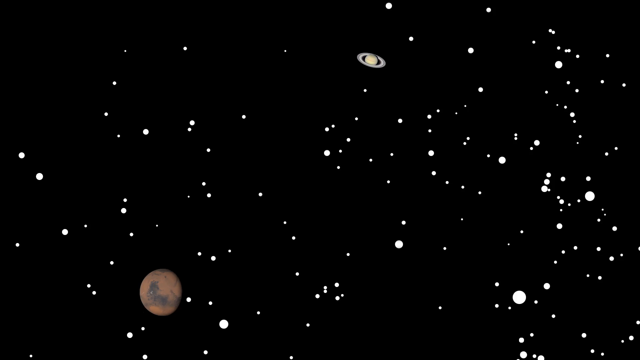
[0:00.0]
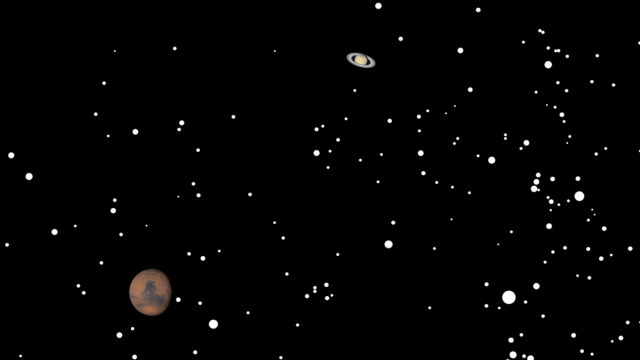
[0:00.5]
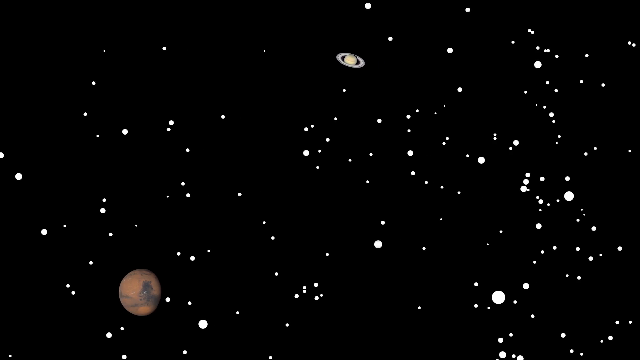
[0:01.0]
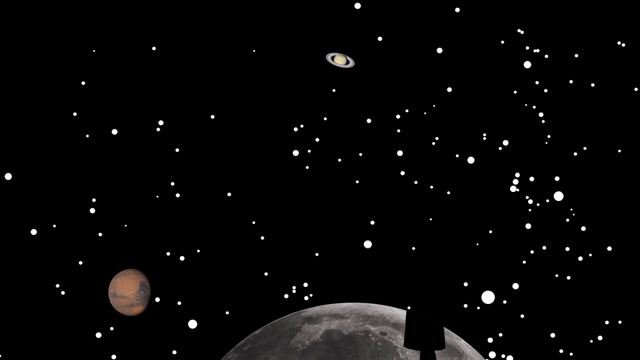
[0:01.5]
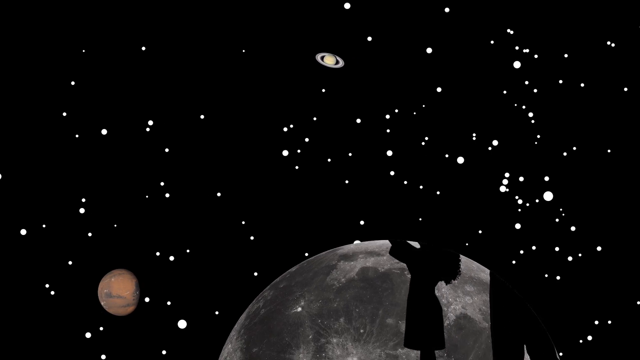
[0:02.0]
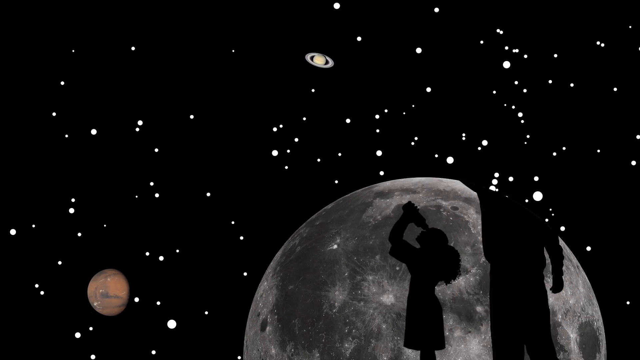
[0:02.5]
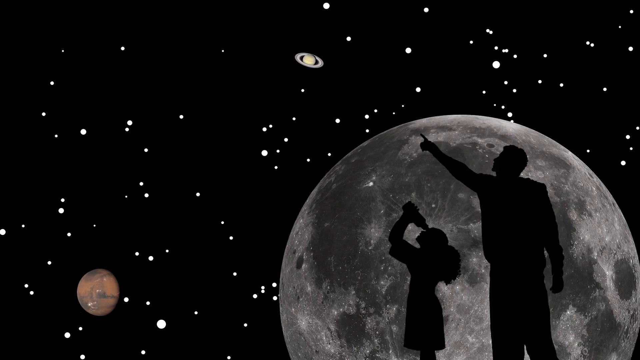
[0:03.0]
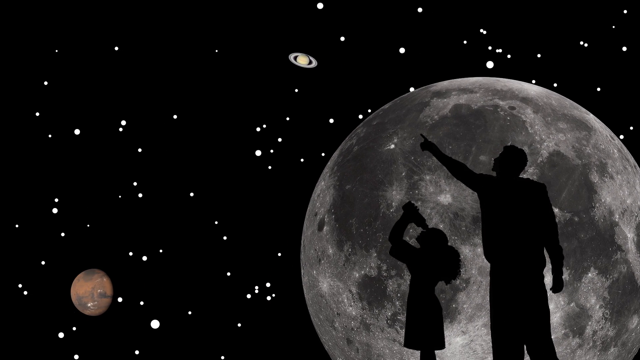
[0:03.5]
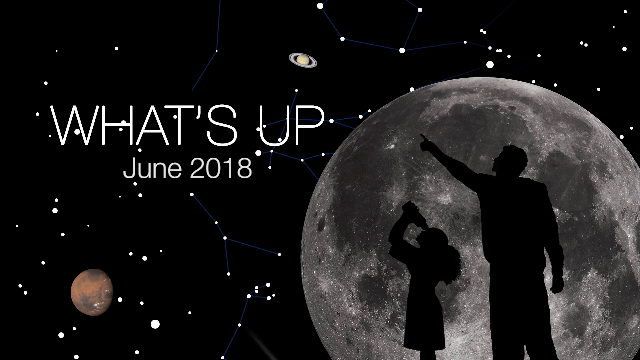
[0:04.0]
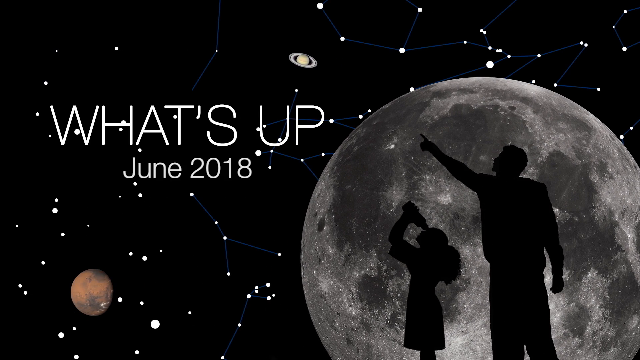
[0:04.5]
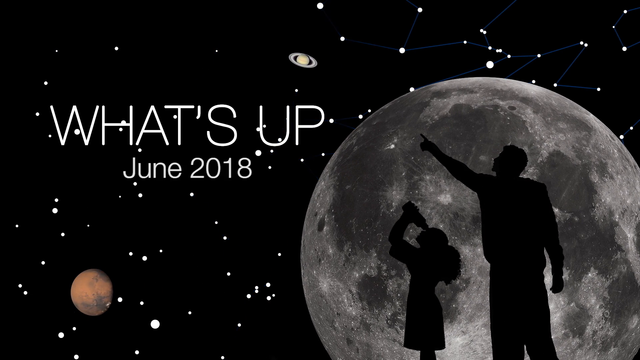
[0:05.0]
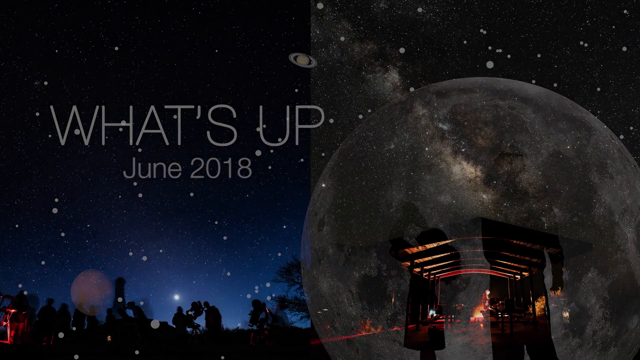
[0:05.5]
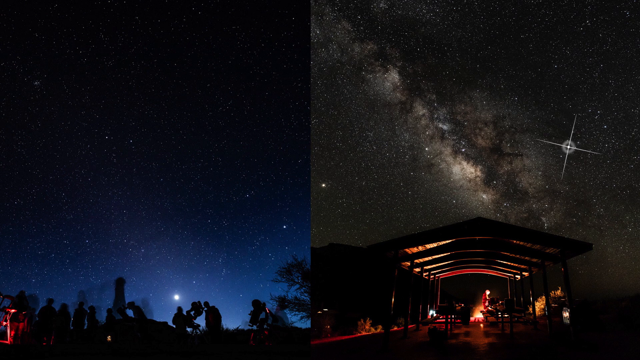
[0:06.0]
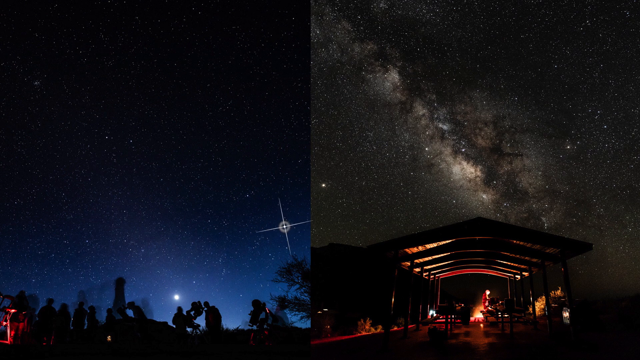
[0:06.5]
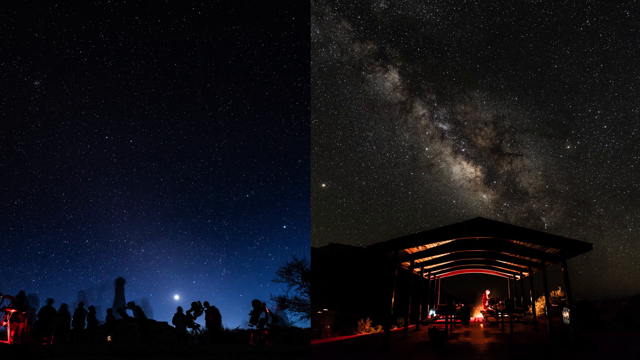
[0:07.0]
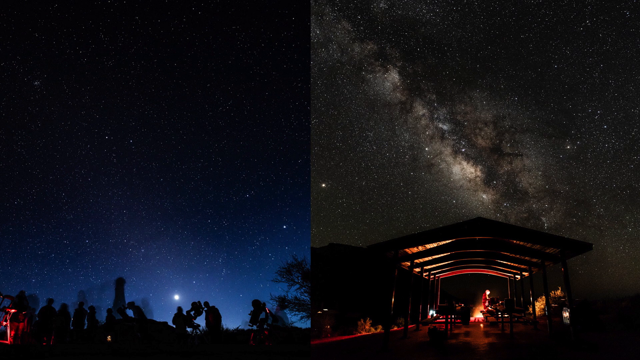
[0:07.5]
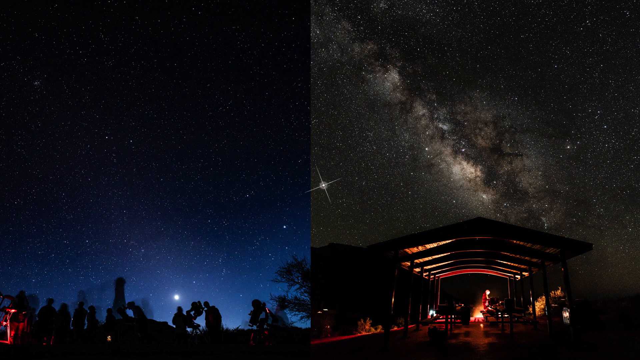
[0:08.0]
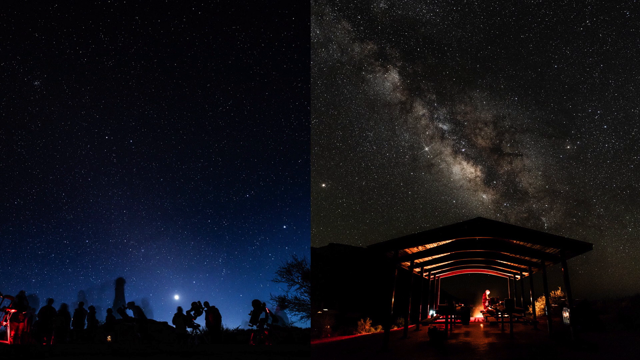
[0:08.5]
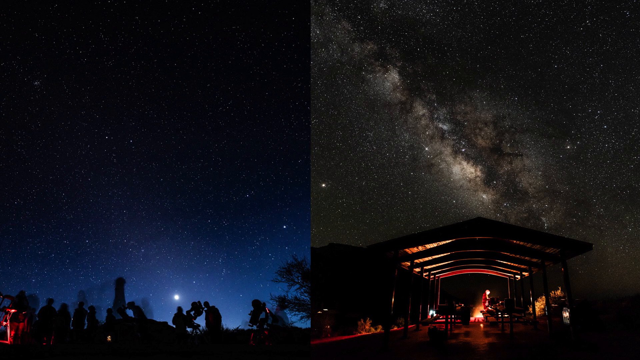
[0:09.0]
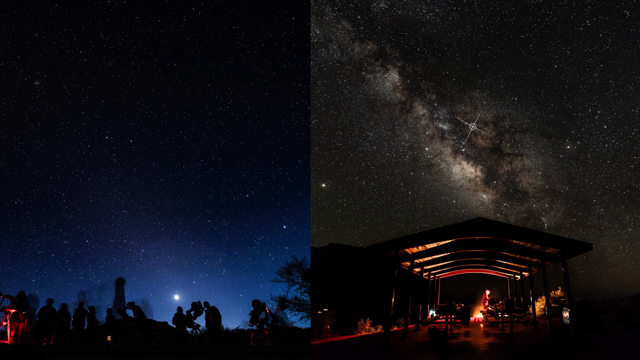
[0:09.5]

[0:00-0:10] The video appears to open with the credits for a show called What's Up, a NASA-produced show from June 2018. The opening credits show space and celestial bodies such as planets and stars, a giant moon, and two silhouettes of people pointing at the stars: one is a female child using a telescope, and the other is a male behind her. The next scene is a split screen. The left side looks like a desert sky, with some cactuses on the ground, taken at nighttime or dawn while it is dark outside. The right side is also a picture of the Milky Way, with some kind of pagoda on the ground; it is too dark to make out the structure, but the sky features the Milky Way and a very bright star. Some of the stars sparkle.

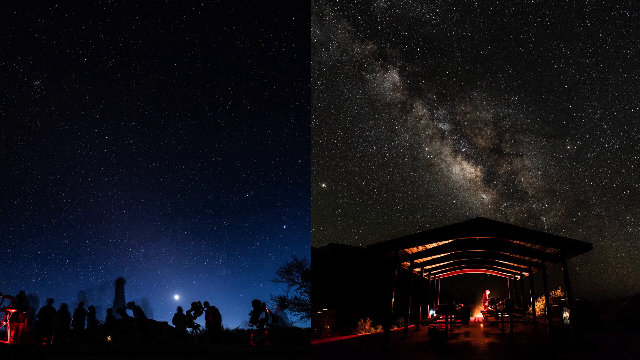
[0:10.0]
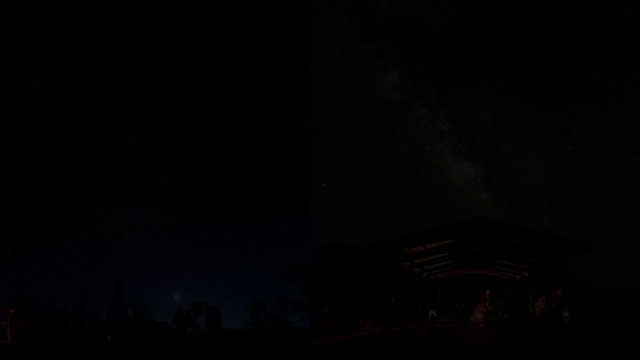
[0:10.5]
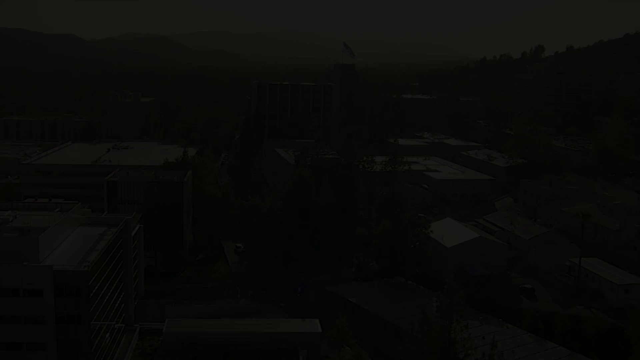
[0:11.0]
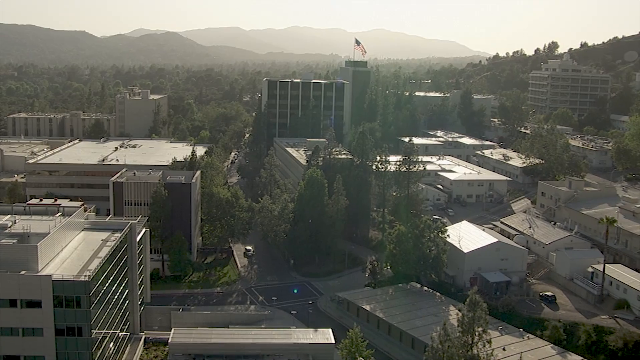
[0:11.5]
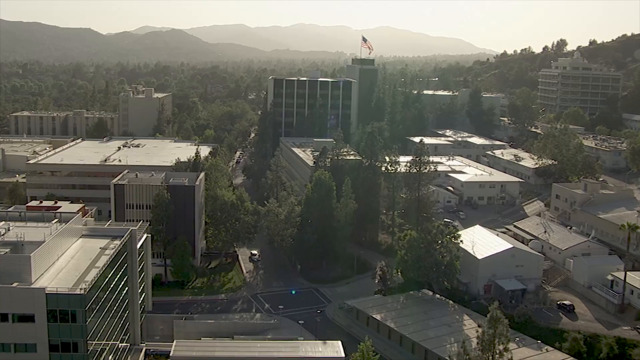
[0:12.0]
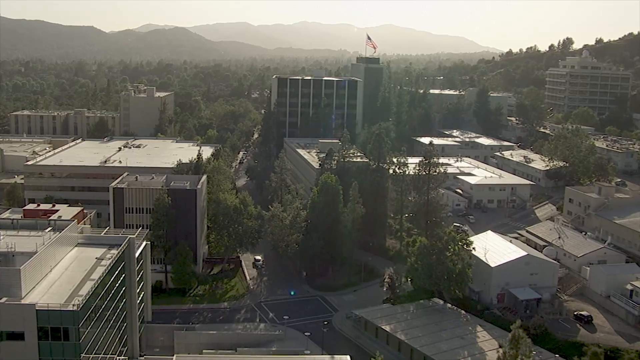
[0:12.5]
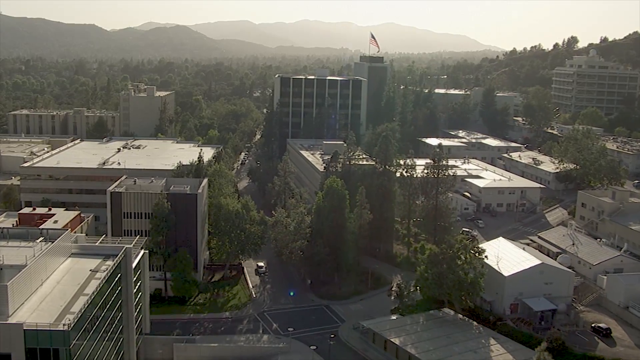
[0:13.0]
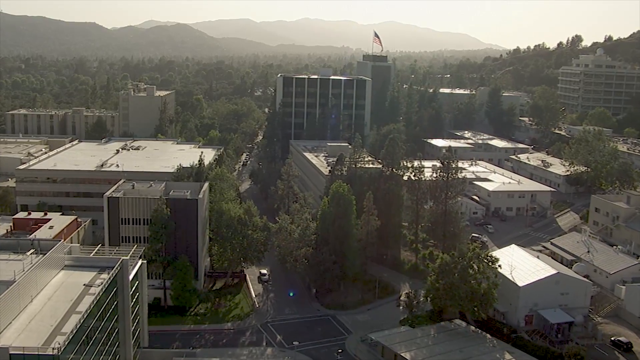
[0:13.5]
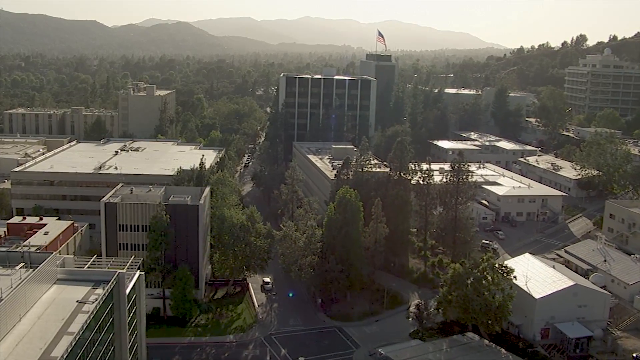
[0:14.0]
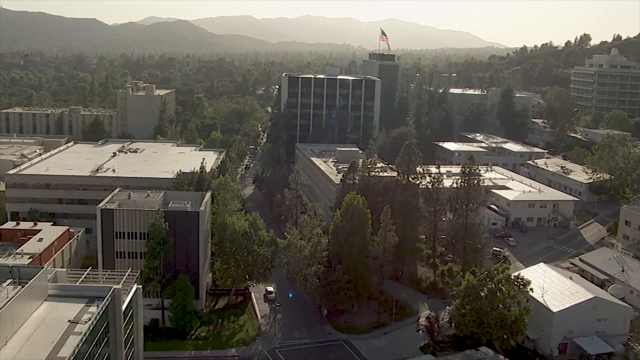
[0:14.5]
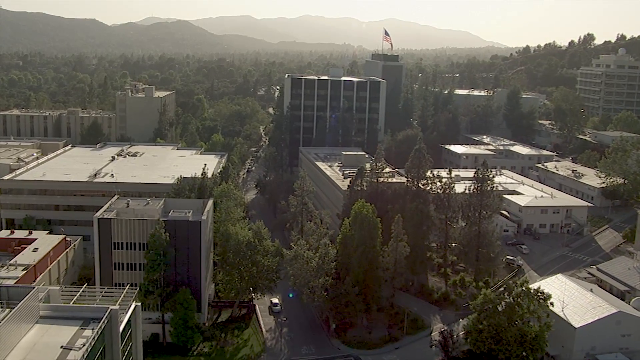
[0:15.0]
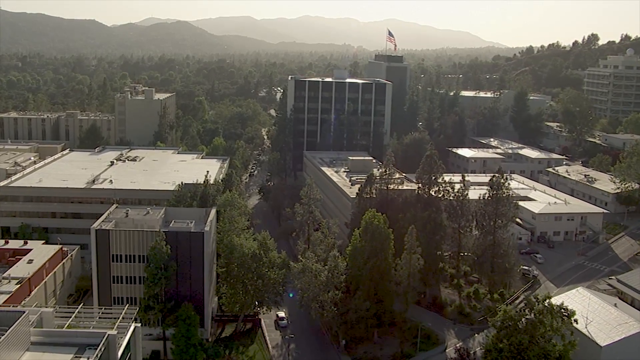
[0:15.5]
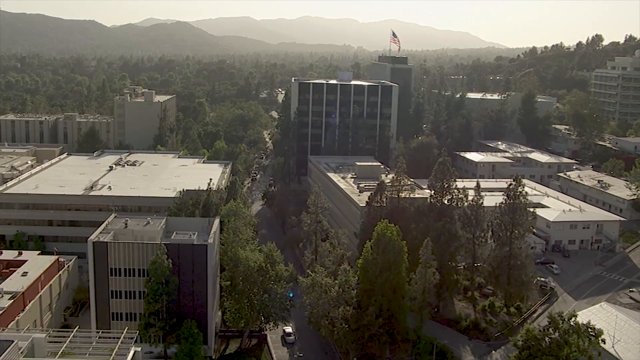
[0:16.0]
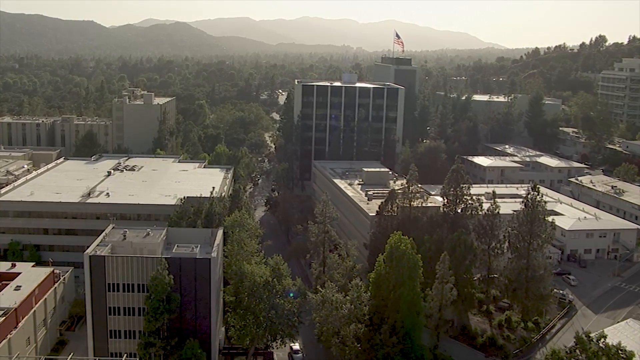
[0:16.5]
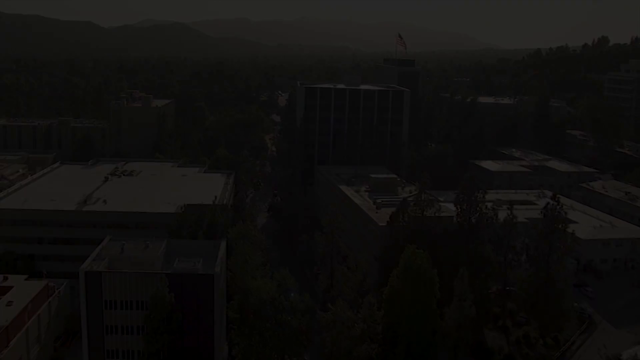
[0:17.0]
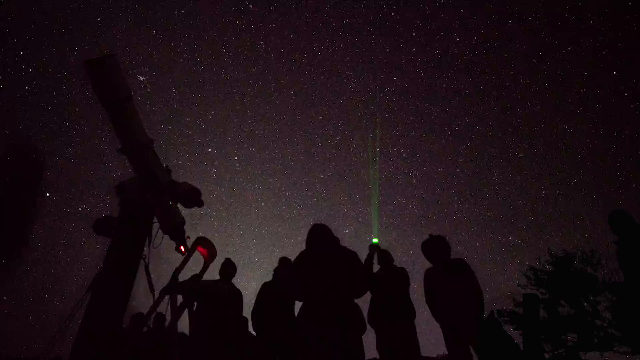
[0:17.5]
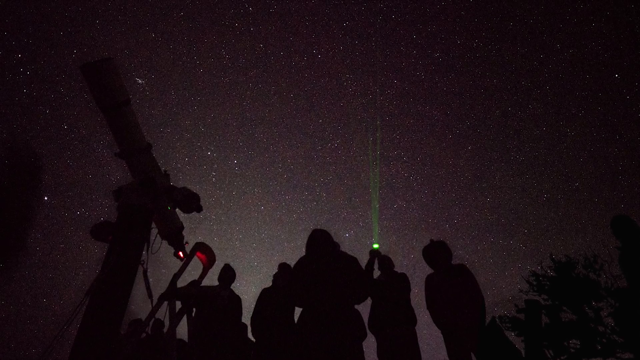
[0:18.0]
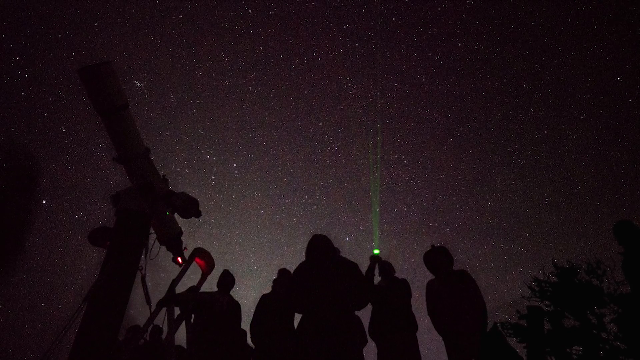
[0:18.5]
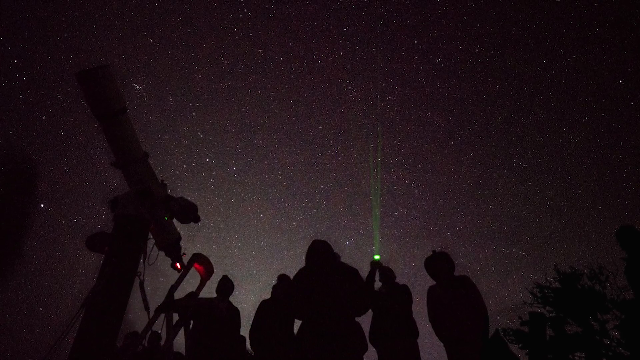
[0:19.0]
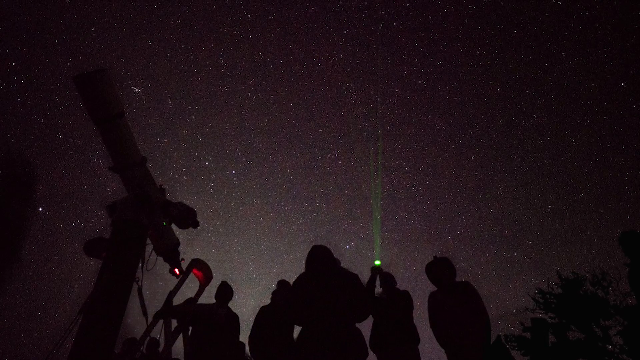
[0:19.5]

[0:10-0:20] A bird's-eye view shows a city with medium-sized industrial buildings and apartment complexes, and a major road through the center of the city. The next shot shows silhouettes of people standing around outside in a field, looking up at the sky; because they are silhouettes, their gender and features cannot be made out. There is a telescope on a tripod, and a person with some kind of green laser points it up at the sky. The sky is completely black with white dots representing planets and stars.